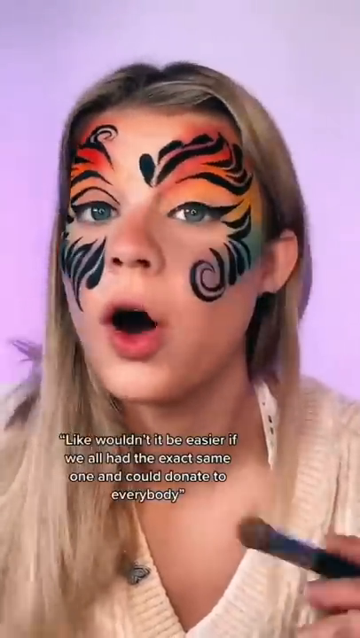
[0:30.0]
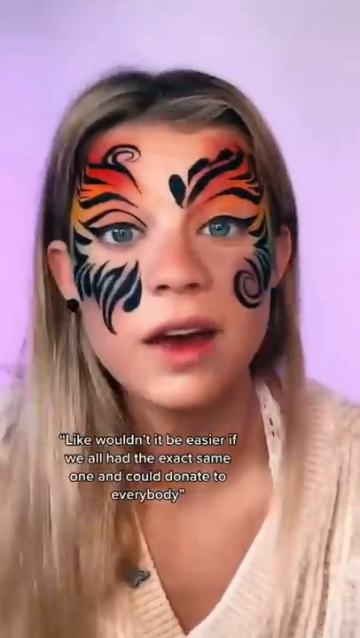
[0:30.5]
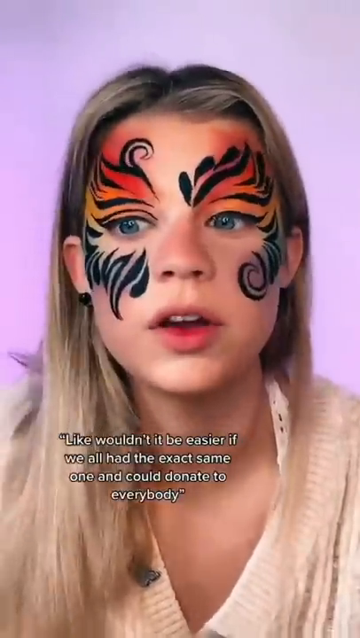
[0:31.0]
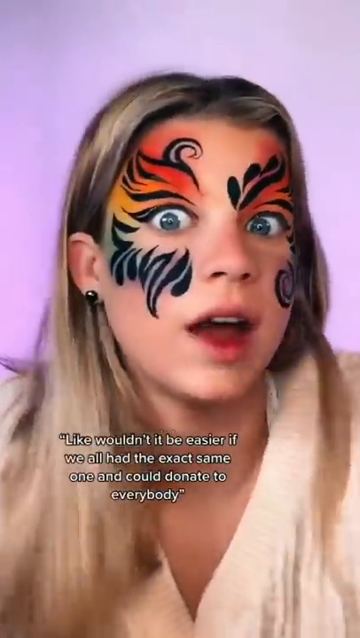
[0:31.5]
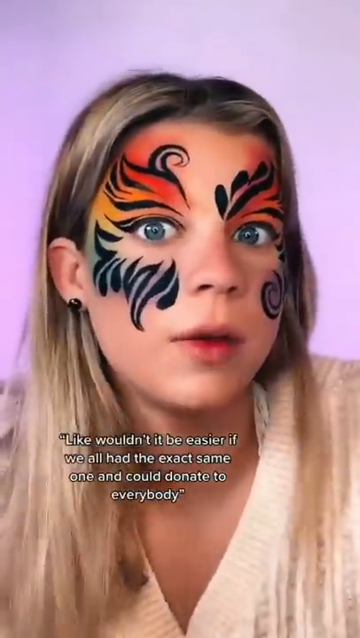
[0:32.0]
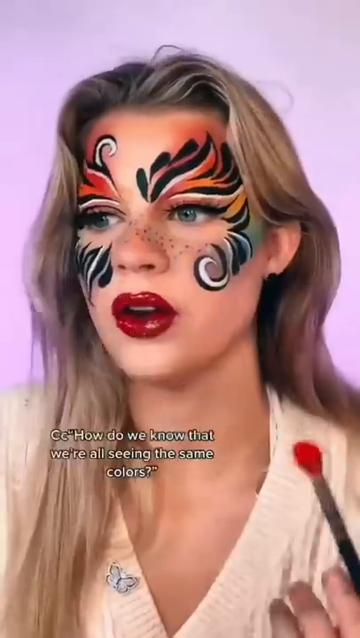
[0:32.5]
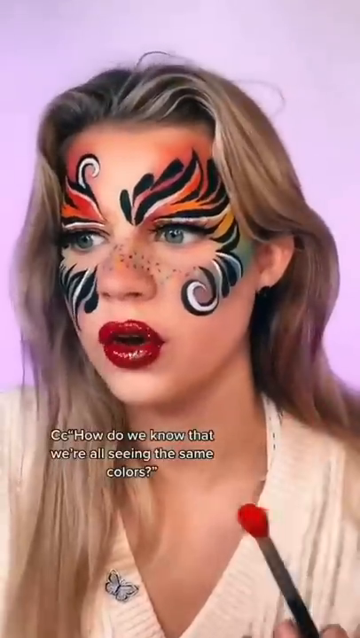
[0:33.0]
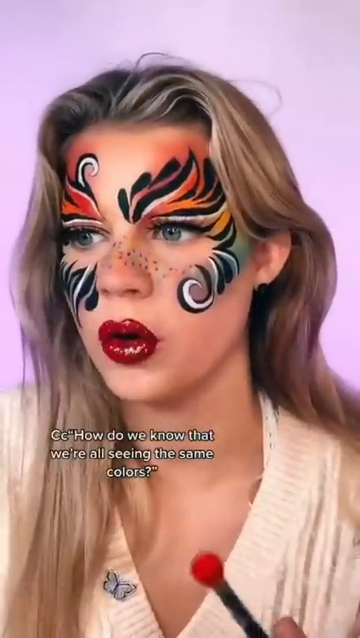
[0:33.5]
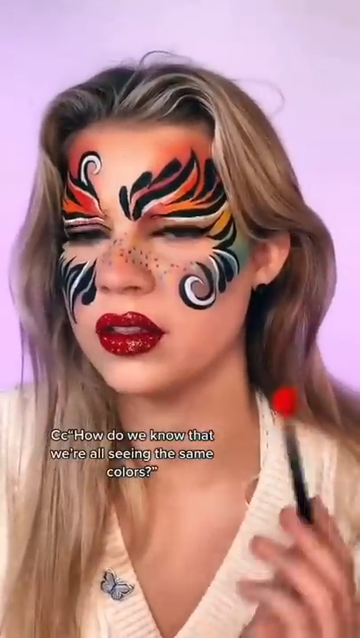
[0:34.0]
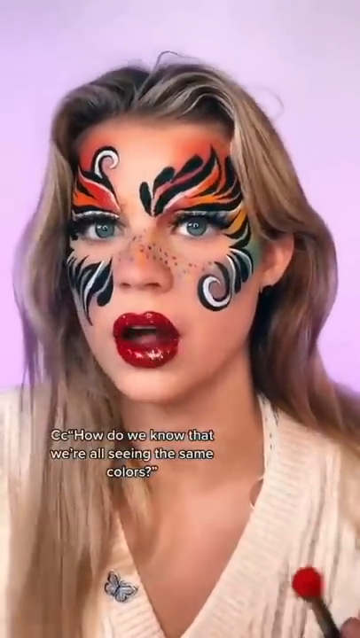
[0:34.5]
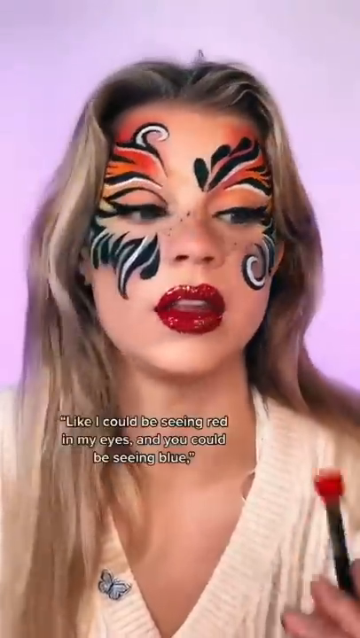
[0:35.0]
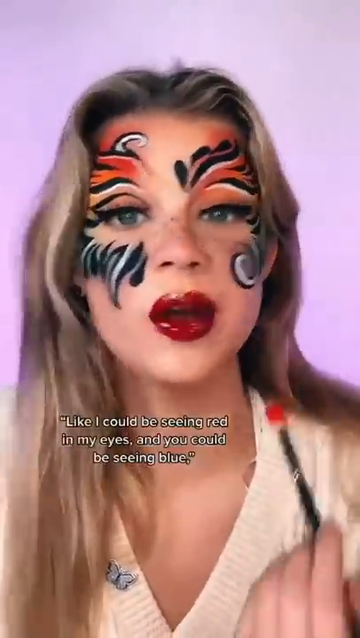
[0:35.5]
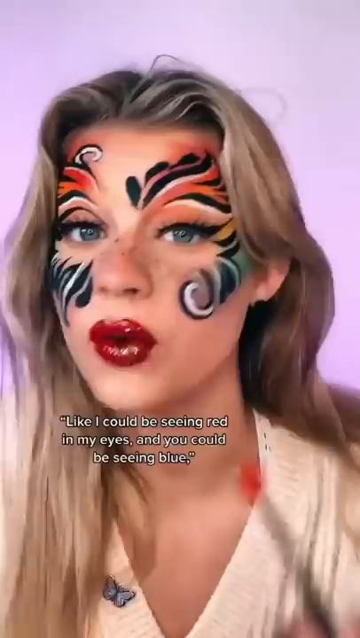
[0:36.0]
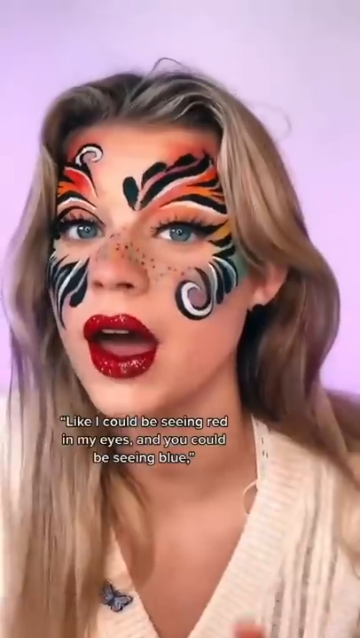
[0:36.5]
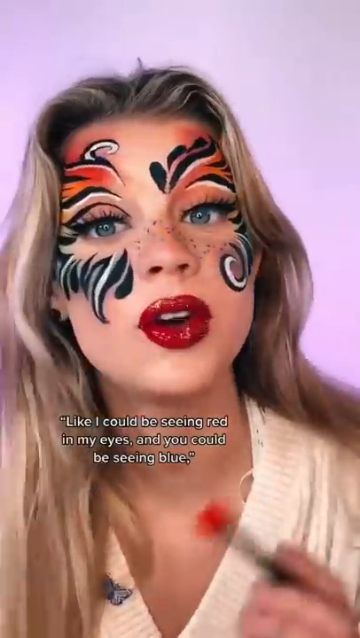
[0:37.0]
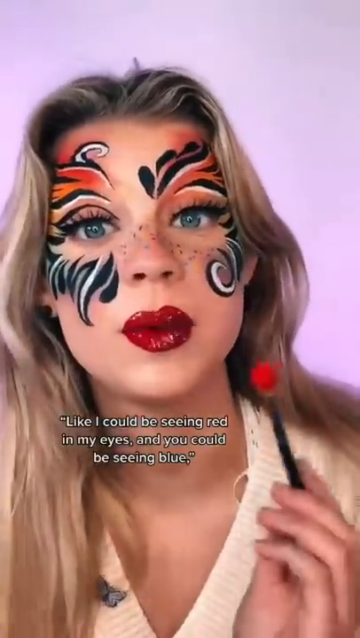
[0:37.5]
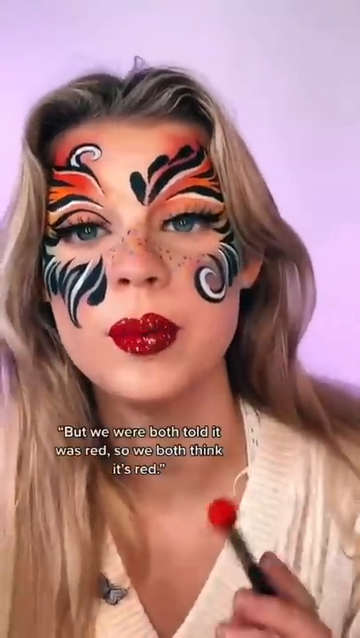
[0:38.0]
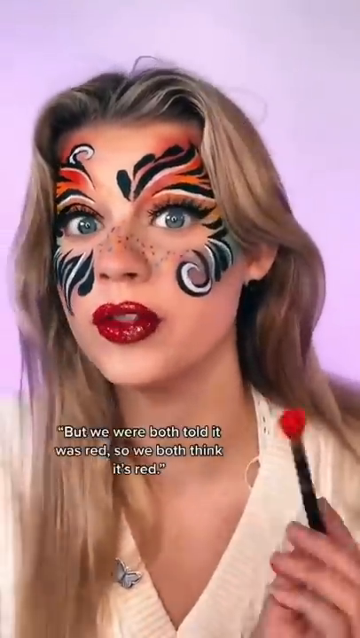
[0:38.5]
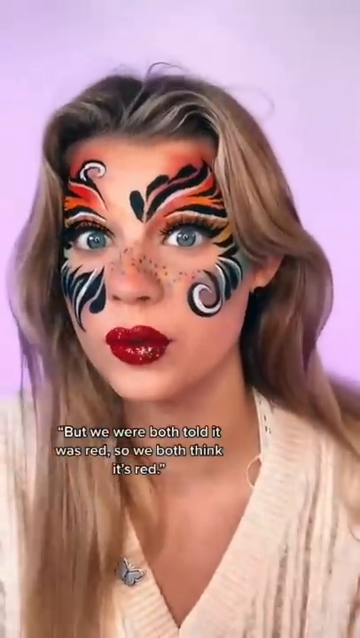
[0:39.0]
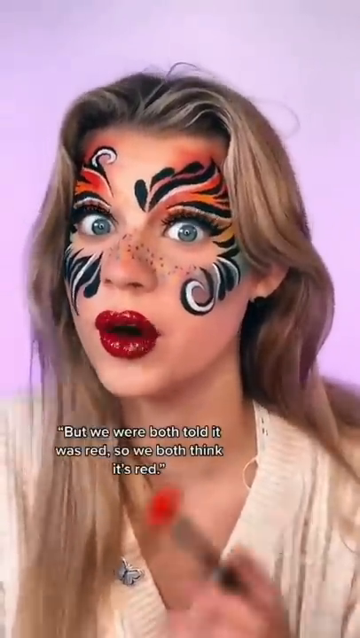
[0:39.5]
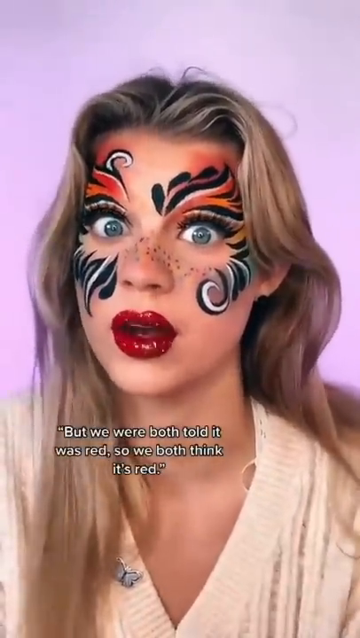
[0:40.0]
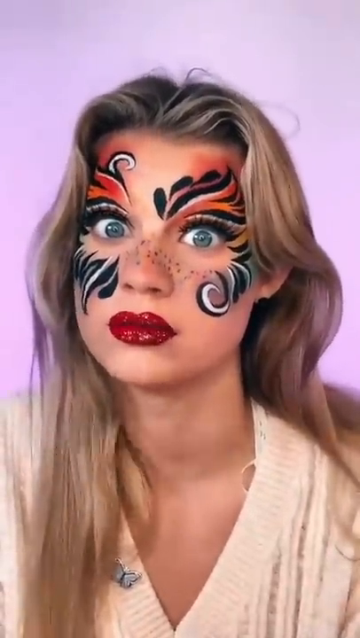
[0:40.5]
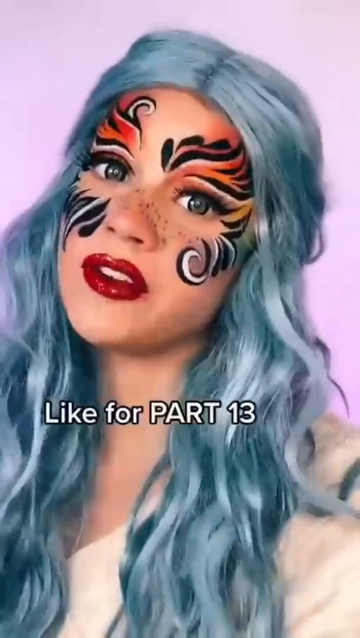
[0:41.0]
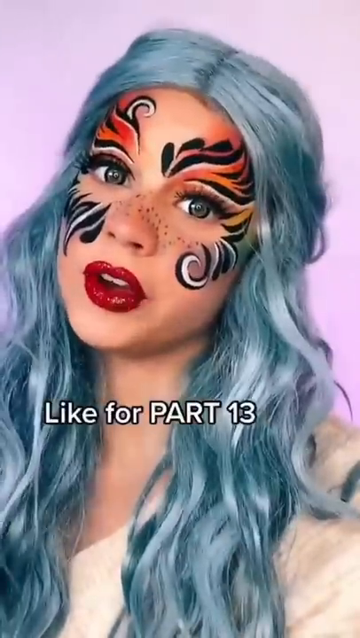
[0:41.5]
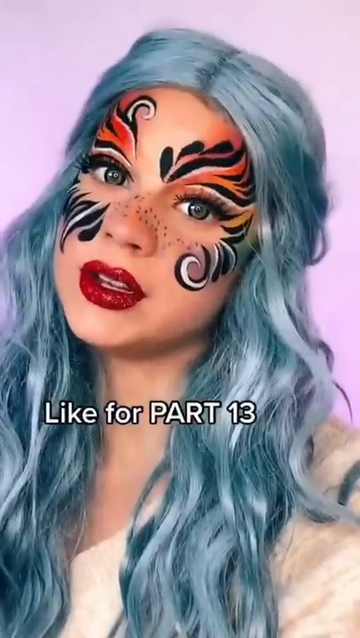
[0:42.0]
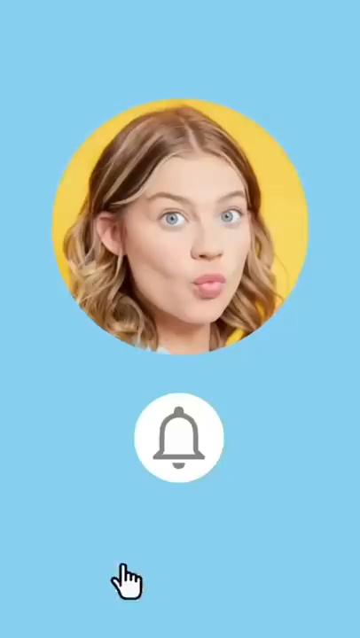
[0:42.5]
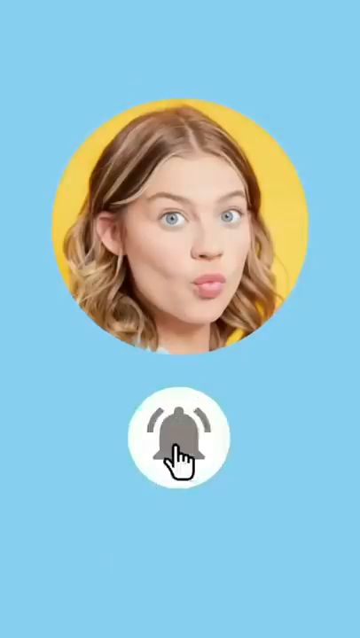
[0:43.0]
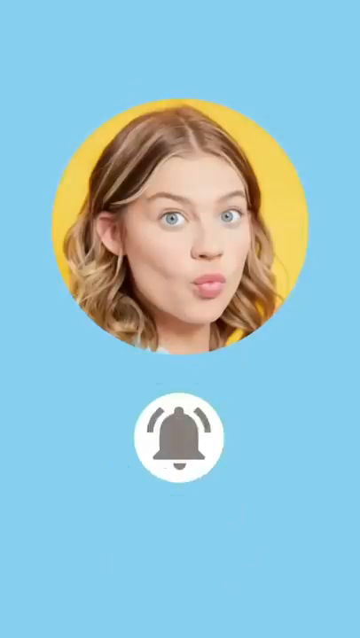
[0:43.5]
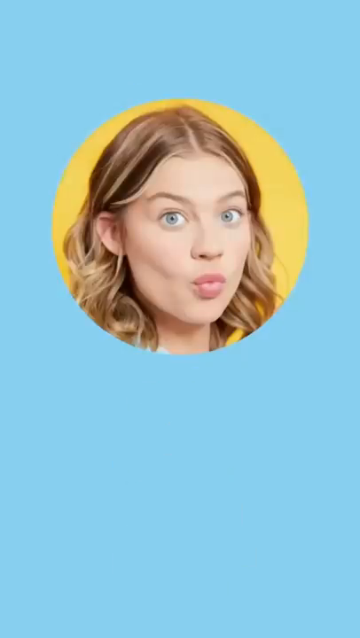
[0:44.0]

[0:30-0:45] The same girl in the white sweater has black paint completely around her eyes. The video cuts, and she has added white details around the black swan, the black leaves and the black water droplets she has drawn. Her lips are now a very vibrant, deep, highly pigmented red. She has also added what looks like stickers or makeup dots forming rainbow freckles across the bridge of her nose. After another cut, she appears in a very short wig that is mostly blue with a few gray streaks. Lastly, the video cuts to a blue panel with a circular photo of the girl's face and an alarm bell beneath it that is clicked on by a mouse, possibly a prompt to follow or subscribe to her channel.